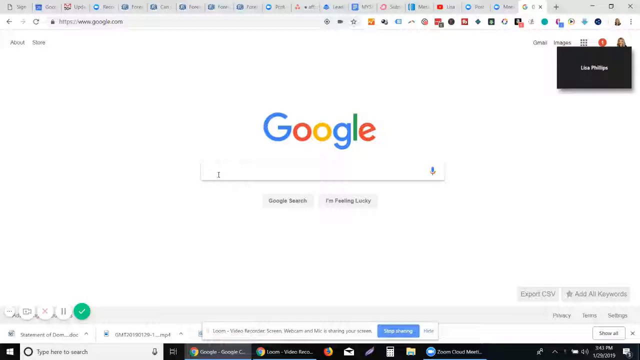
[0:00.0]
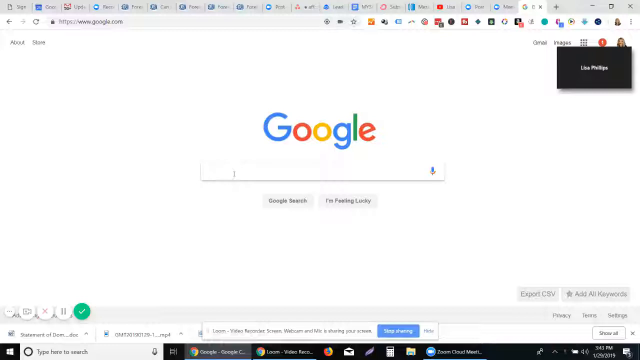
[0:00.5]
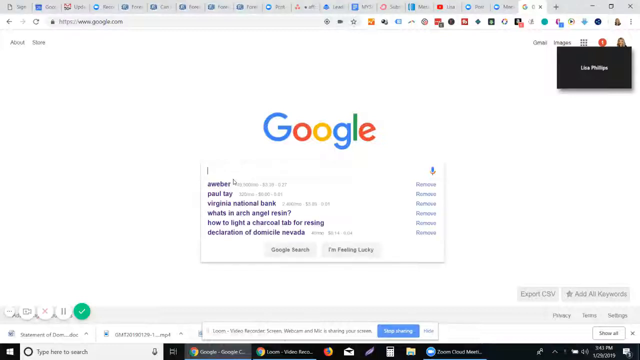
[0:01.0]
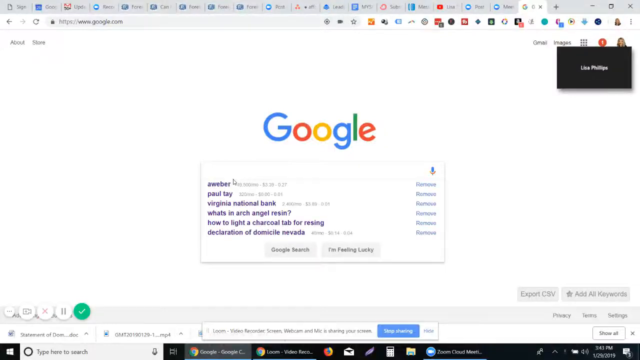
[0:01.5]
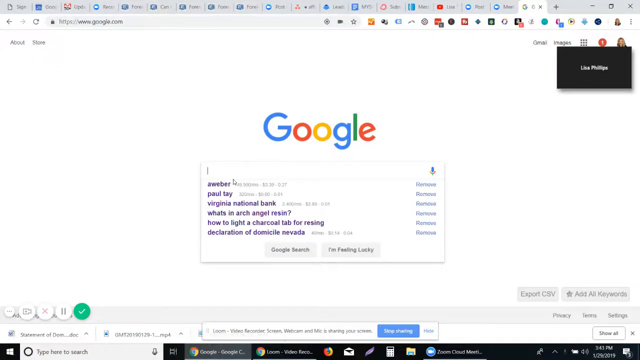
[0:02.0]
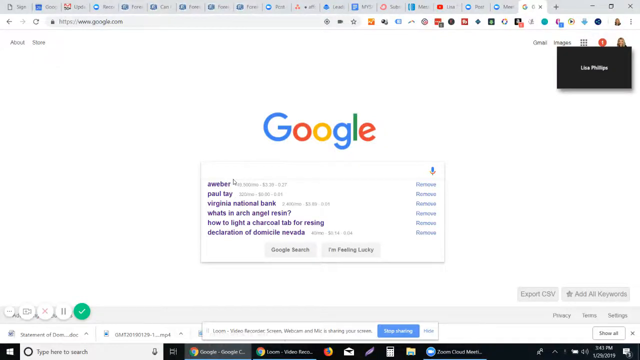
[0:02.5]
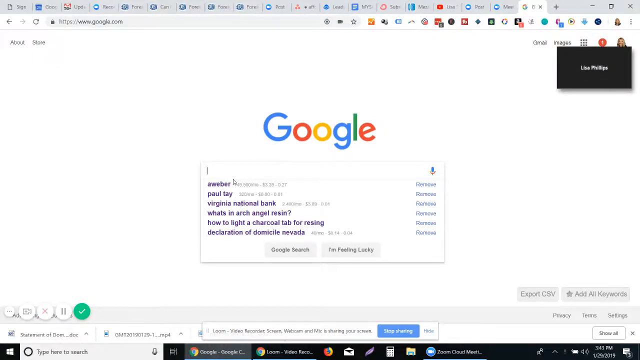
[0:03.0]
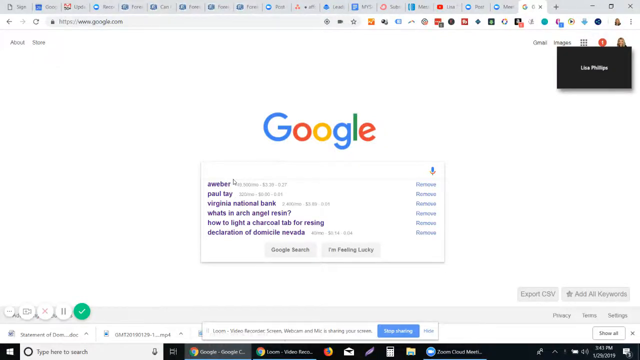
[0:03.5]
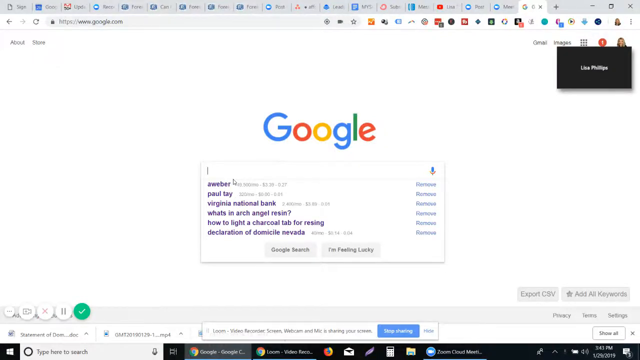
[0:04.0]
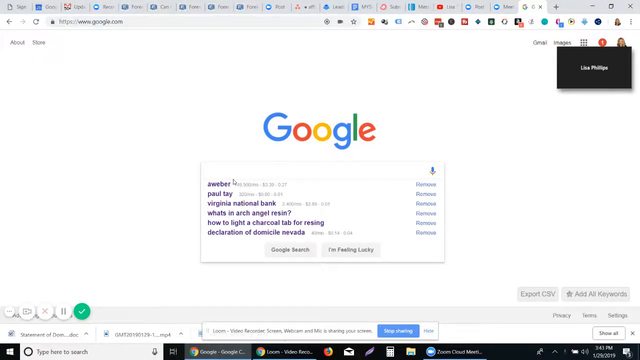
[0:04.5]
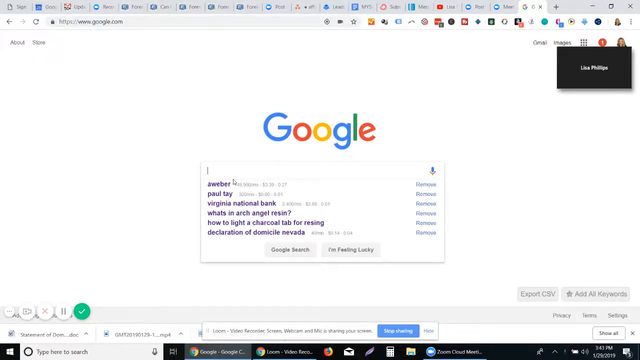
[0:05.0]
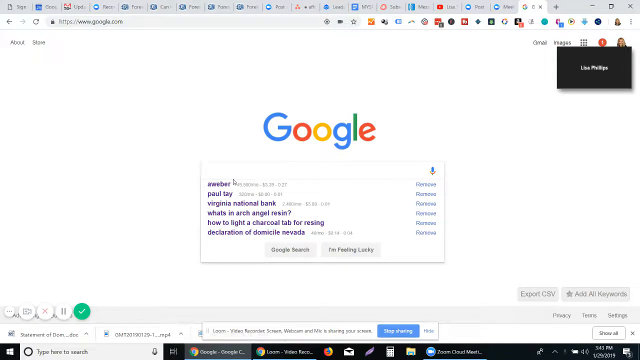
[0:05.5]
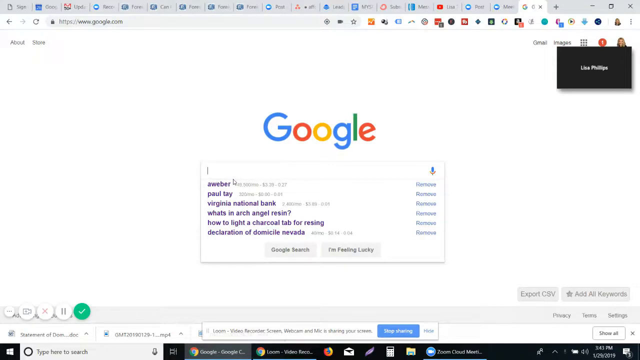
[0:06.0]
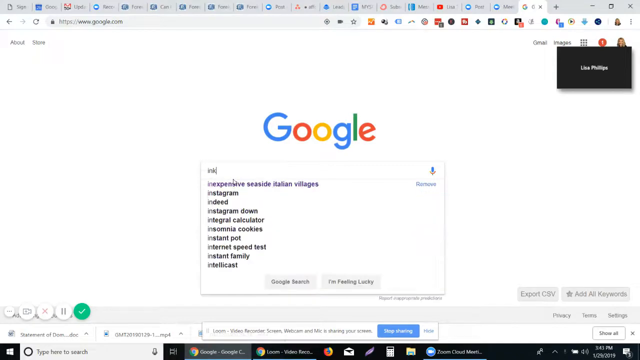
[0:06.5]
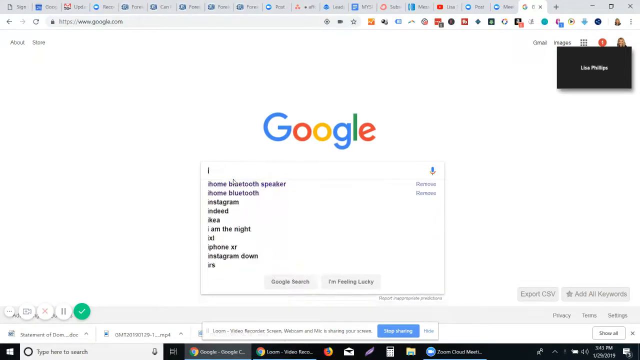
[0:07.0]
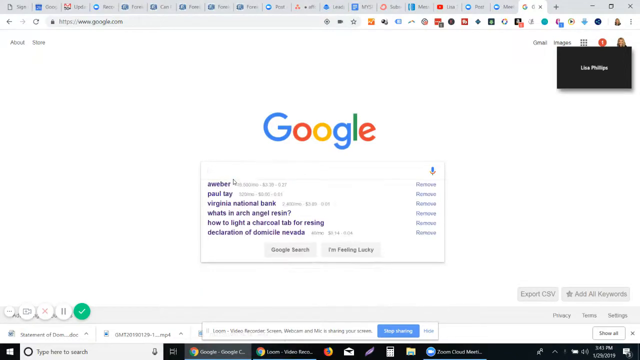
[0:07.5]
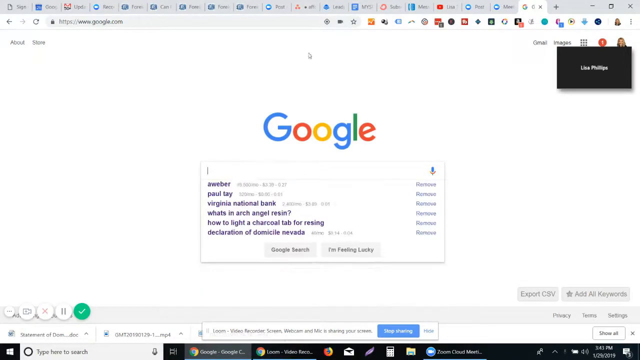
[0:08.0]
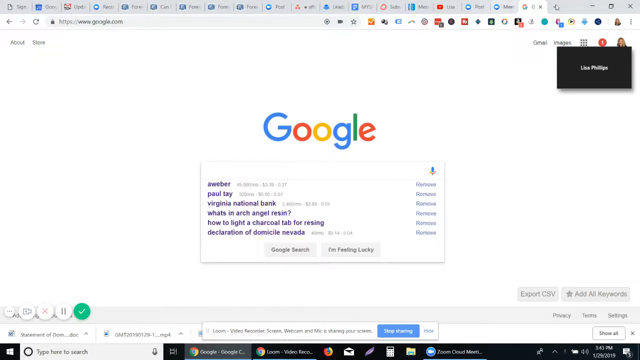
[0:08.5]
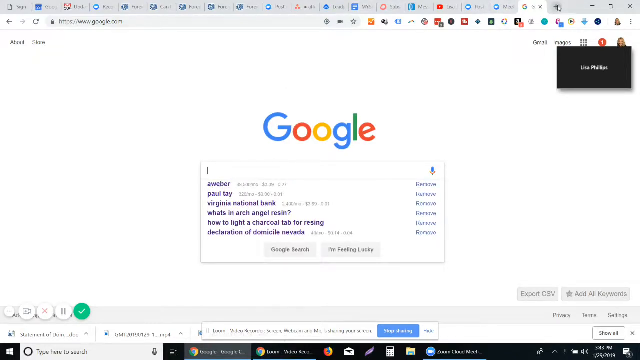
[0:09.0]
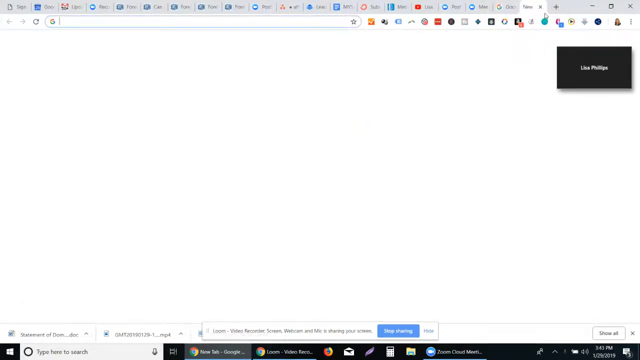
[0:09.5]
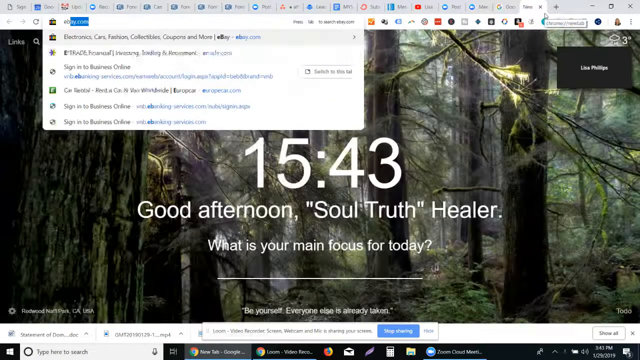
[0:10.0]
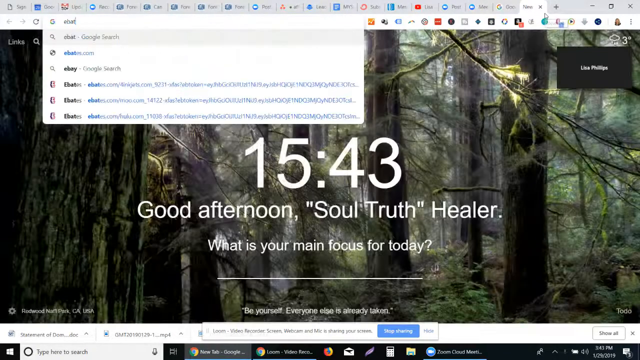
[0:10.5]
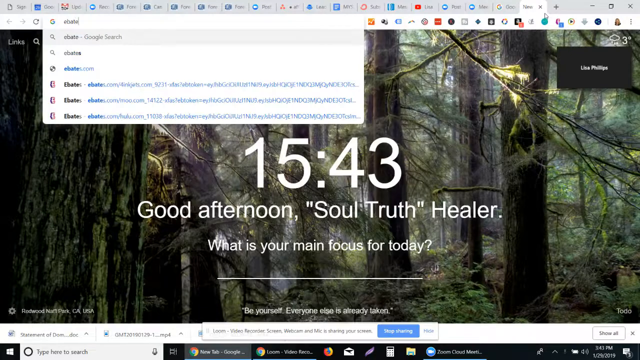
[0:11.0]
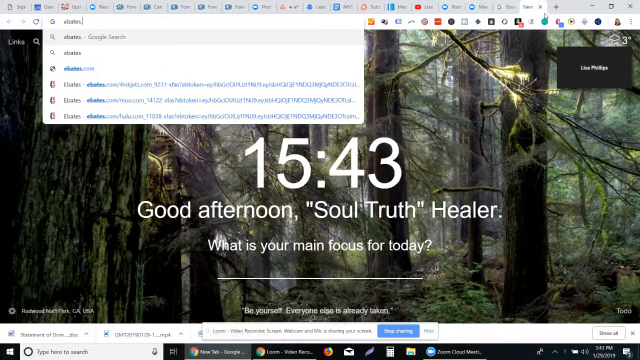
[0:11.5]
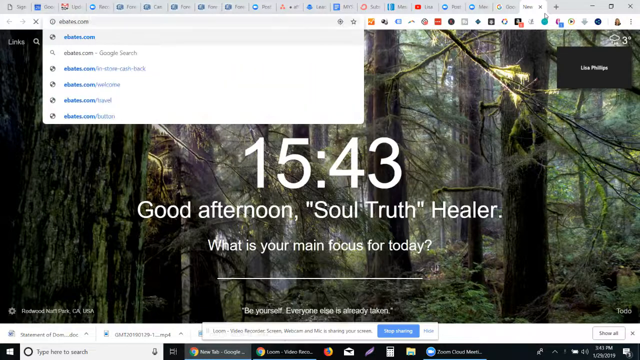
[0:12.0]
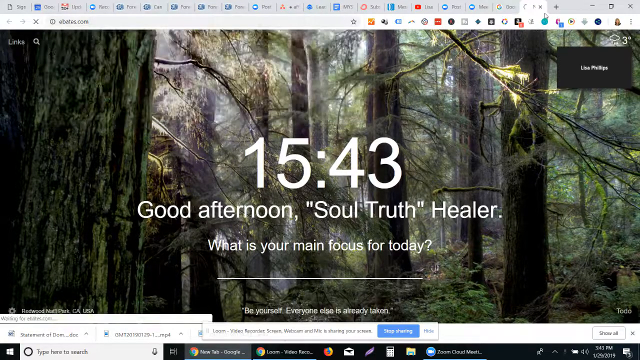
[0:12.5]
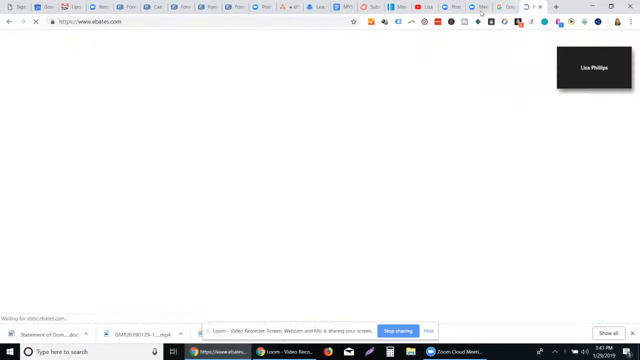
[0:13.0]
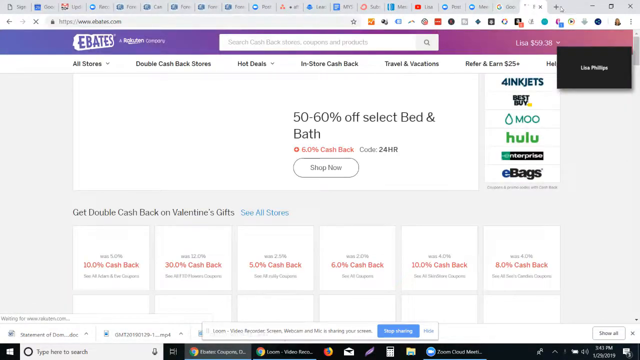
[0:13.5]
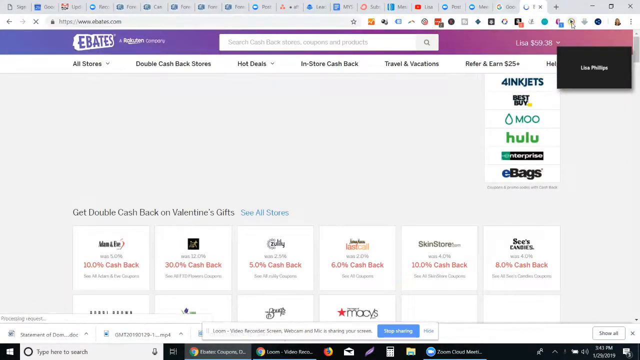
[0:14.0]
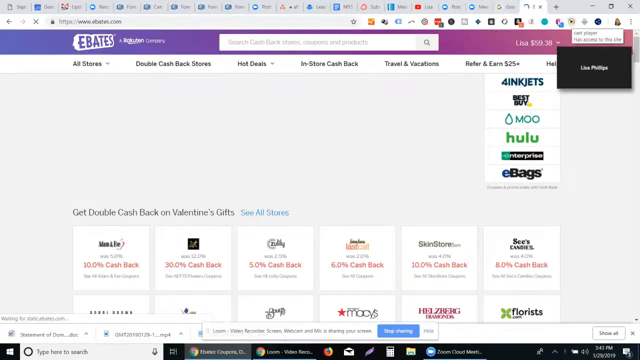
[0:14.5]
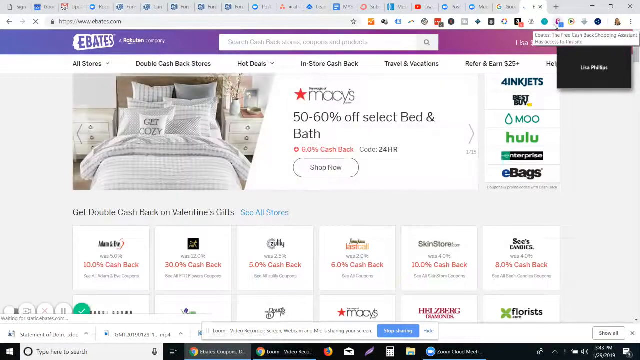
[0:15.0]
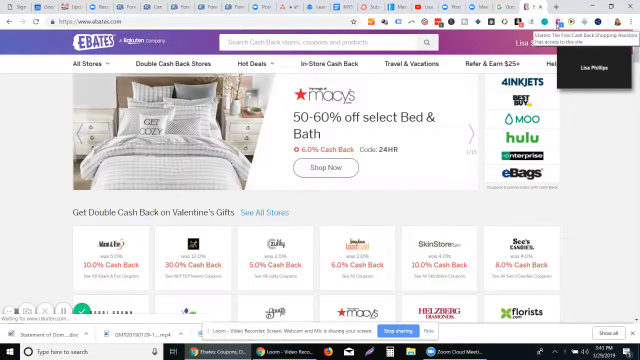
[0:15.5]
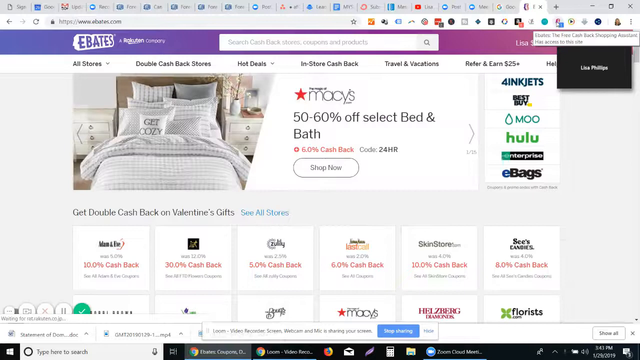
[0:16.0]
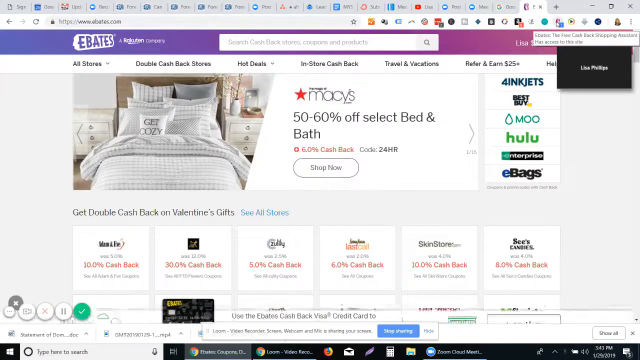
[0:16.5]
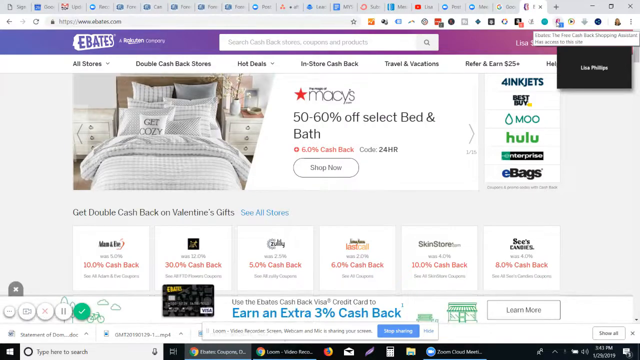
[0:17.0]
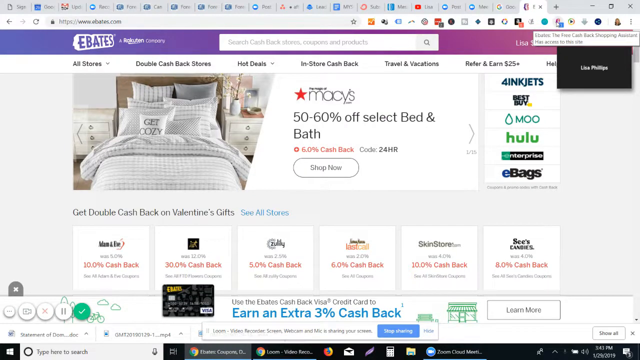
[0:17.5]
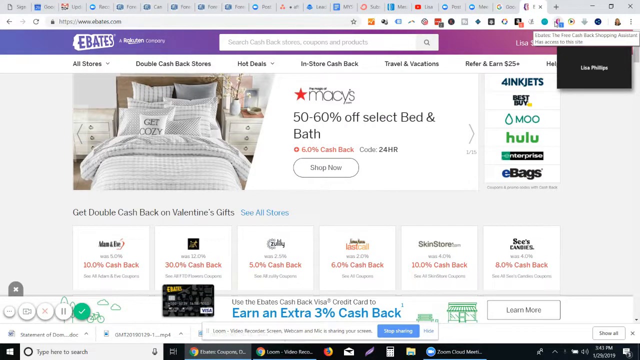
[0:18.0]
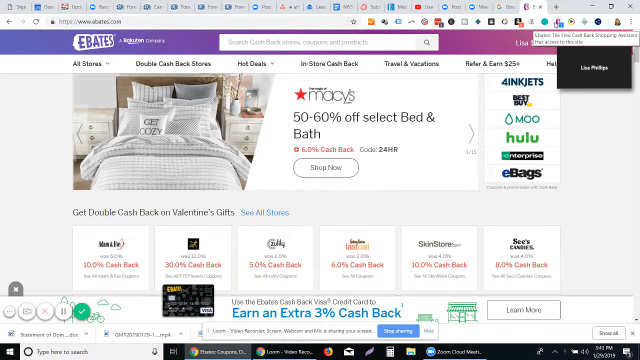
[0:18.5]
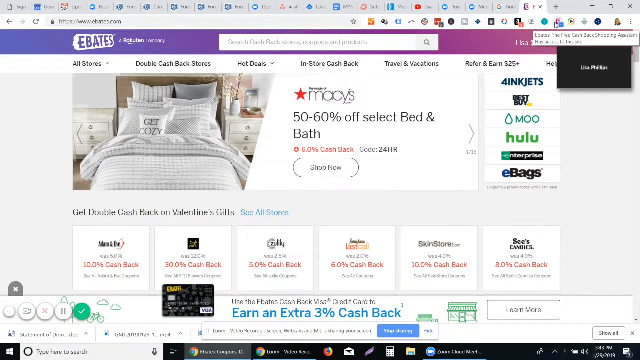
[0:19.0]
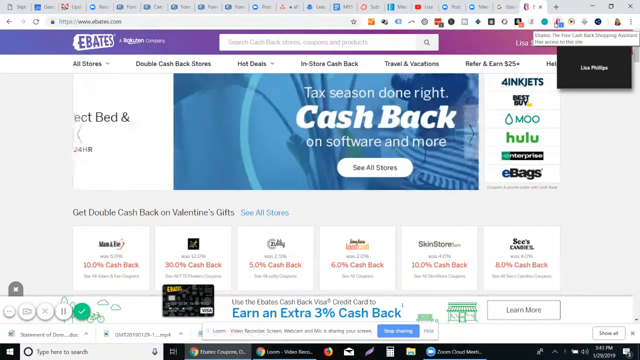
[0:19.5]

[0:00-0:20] The video starts on a desktop with a large number of browser tabs open across the screen; they look blurry when zoomed in. The last tab reads "google.com," showing the Google search page with the Google logo. The recent searches include something about Virginia National Bank. Then "ebates.com" is typed in and the site comes up, showing Macy's at 50 to 60 percent off and a tax season message about saving money. The Ebates menu reads "all stores," "double cash back stores," "hot deals," "in-store cash back," "travel and vacations" and "refer and earn $25." Stores being promoted apparently include inkjet, Best Buy, Hulu, Enterprise and eBags.